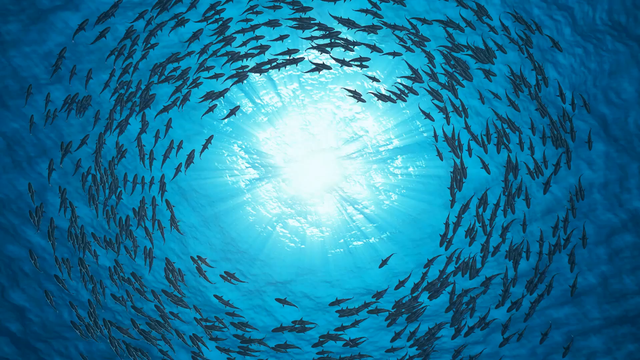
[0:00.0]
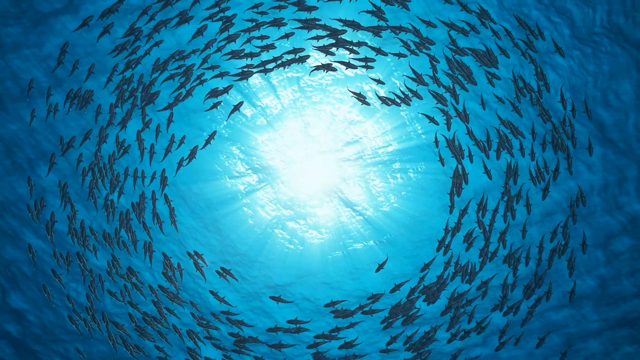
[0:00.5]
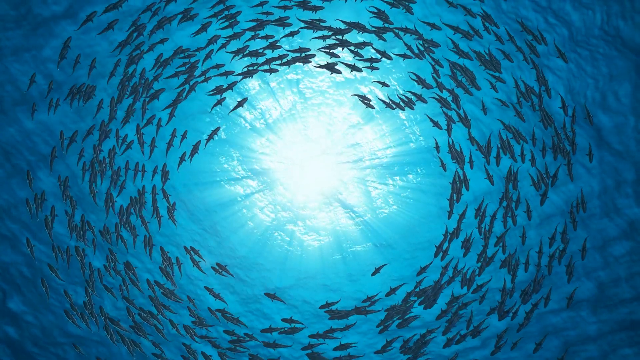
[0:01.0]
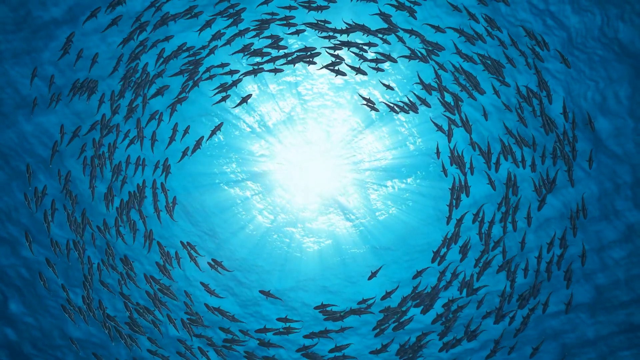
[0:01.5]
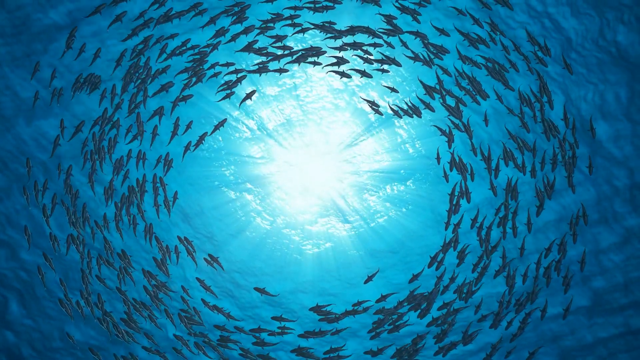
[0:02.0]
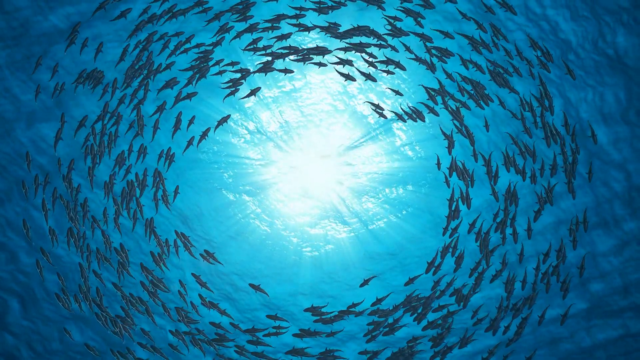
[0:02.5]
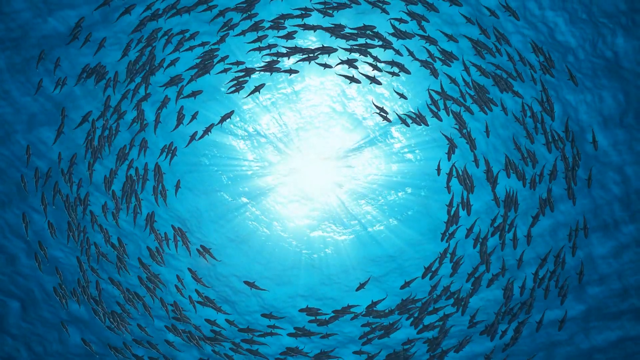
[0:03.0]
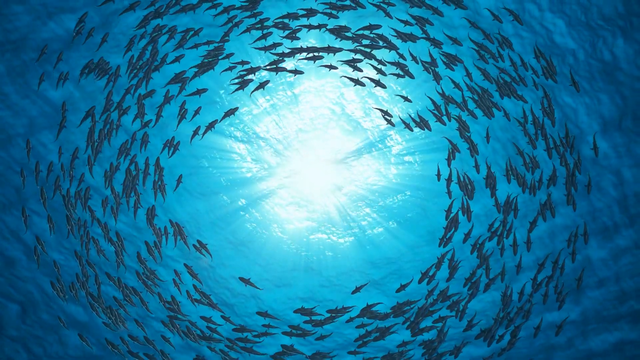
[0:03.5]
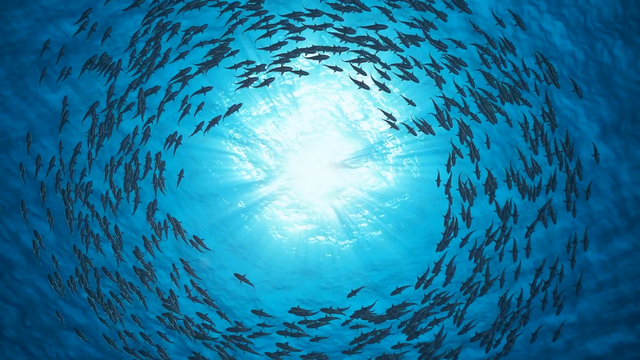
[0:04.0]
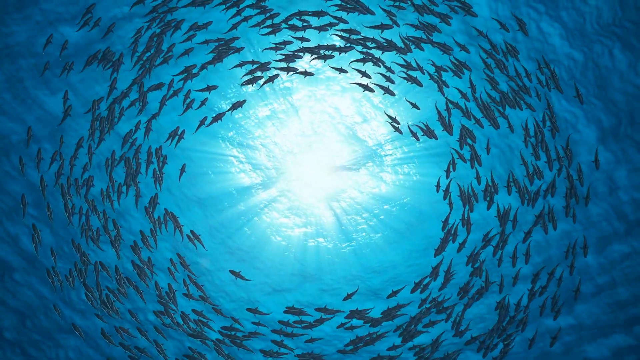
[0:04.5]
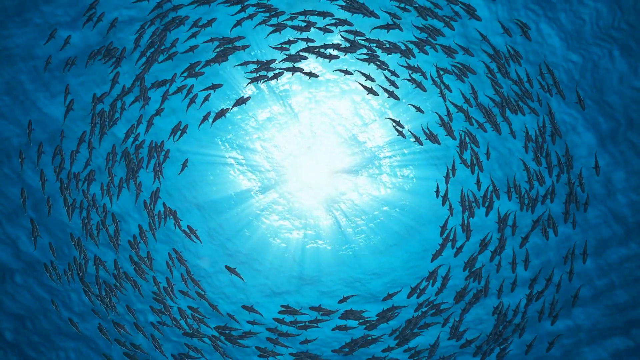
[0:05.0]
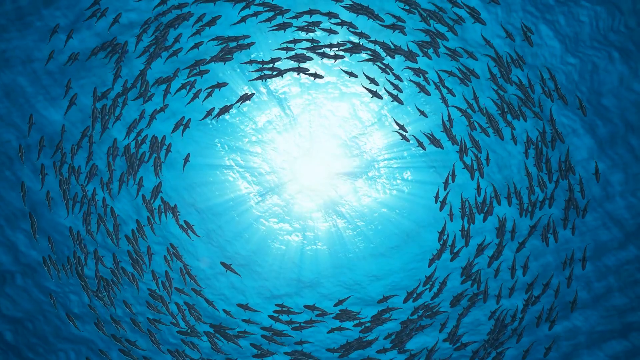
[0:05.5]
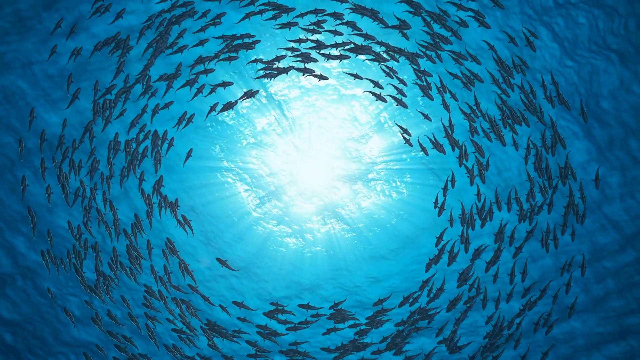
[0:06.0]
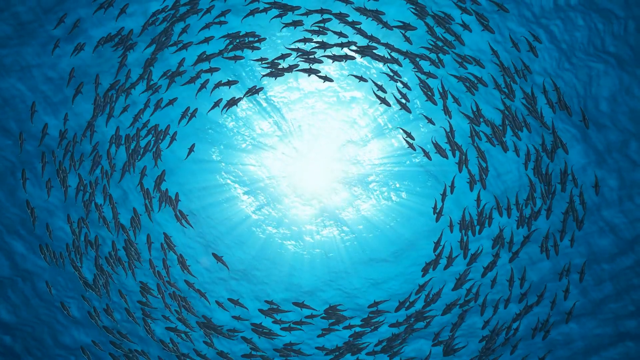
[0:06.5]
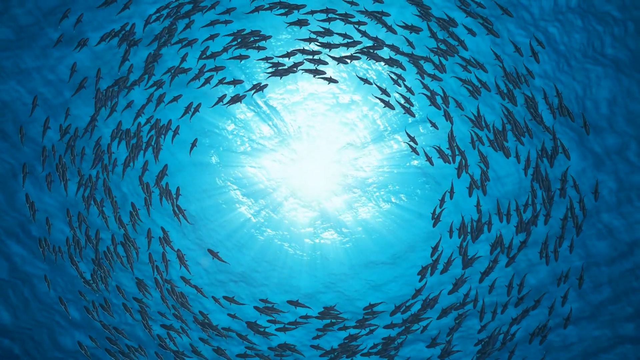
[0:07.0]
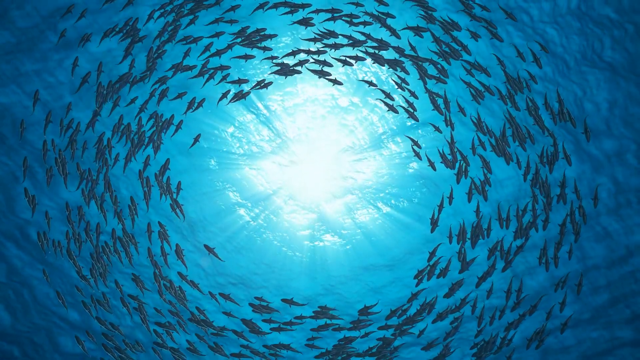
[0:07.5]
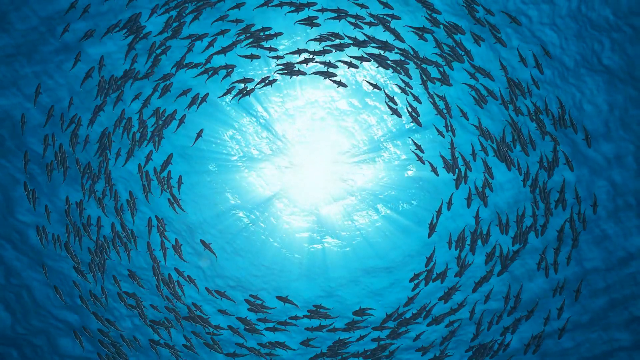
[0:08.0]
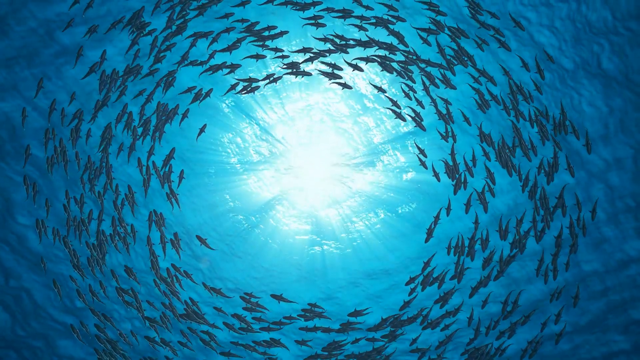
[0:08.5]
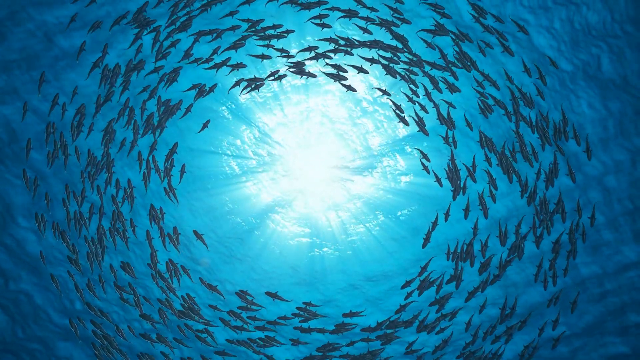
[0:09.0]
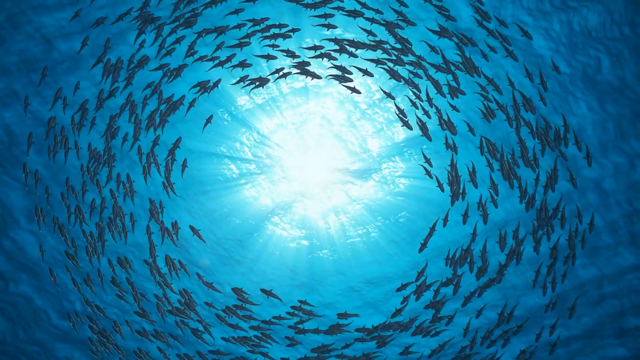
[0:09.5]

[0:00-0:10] The scene is underwater in the blue ocean or sea, deep below the surface, with light visible at the top. Small fish swim in a circle, leaving a gap in the middle, where the blue water reflects or refracts the light. The camera angle is deep down, apparently below the fish, which keep circling.